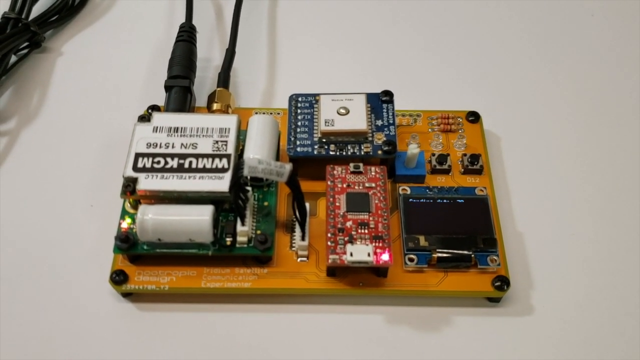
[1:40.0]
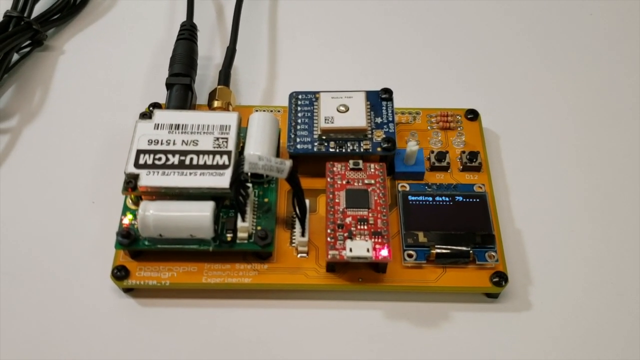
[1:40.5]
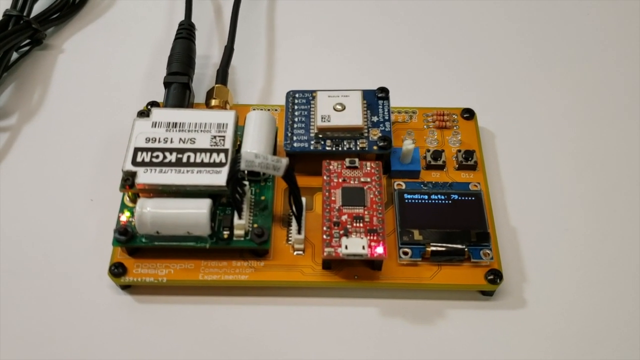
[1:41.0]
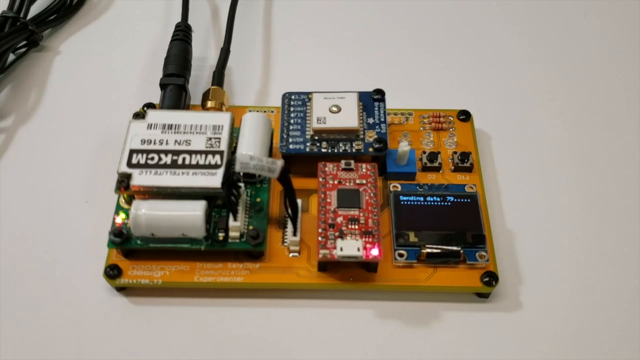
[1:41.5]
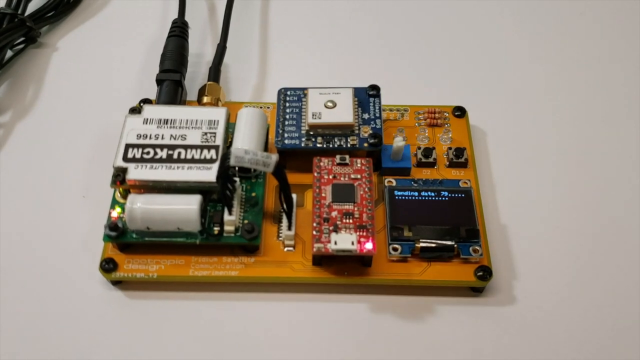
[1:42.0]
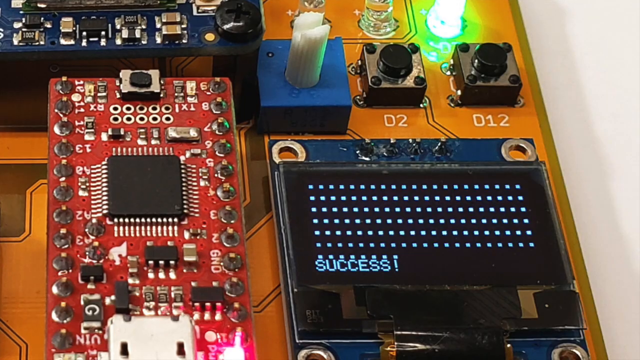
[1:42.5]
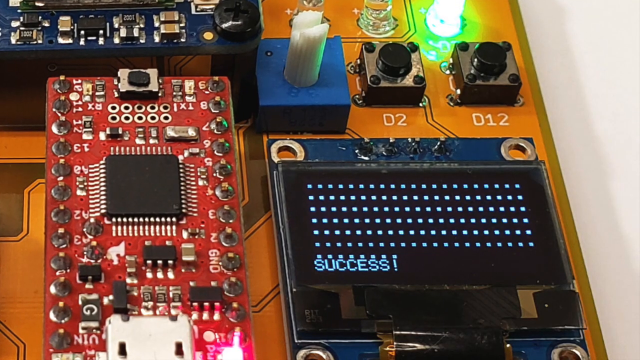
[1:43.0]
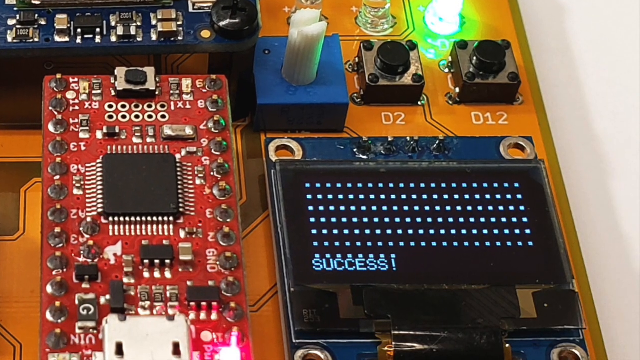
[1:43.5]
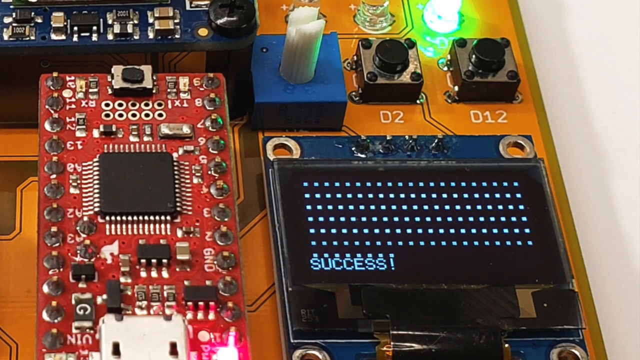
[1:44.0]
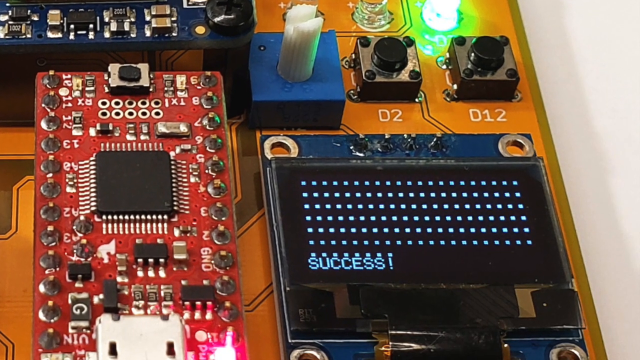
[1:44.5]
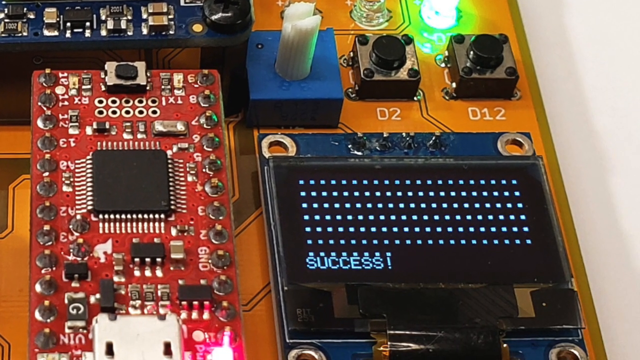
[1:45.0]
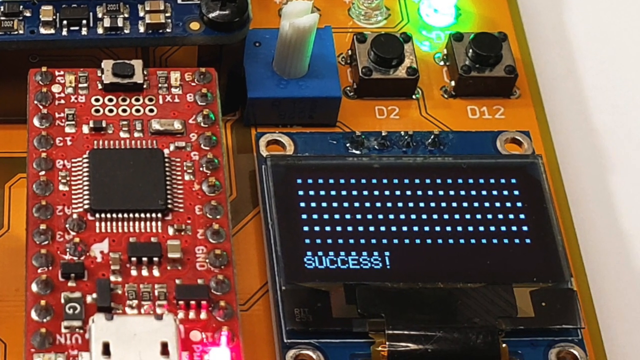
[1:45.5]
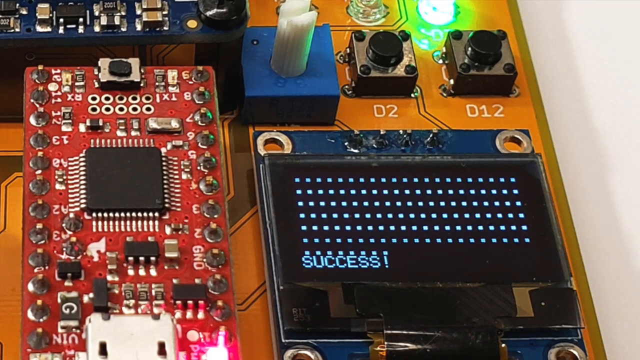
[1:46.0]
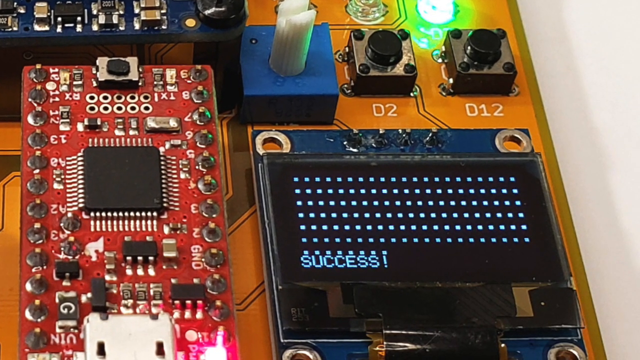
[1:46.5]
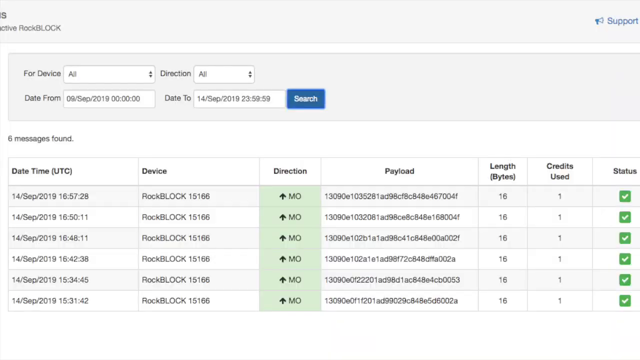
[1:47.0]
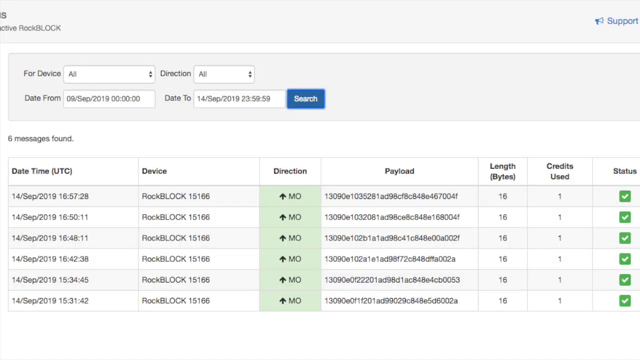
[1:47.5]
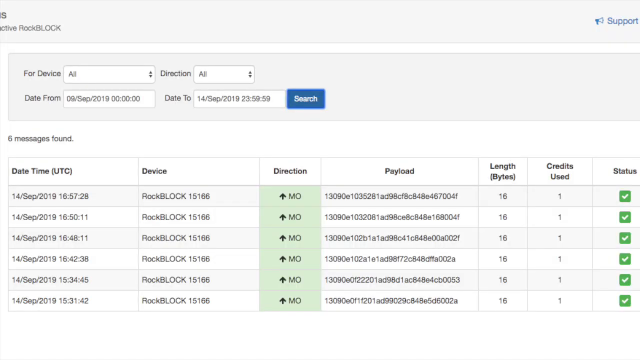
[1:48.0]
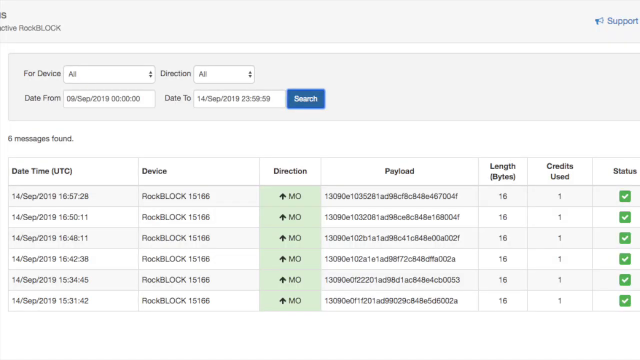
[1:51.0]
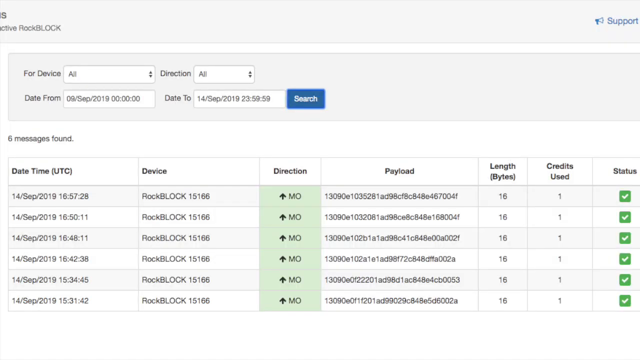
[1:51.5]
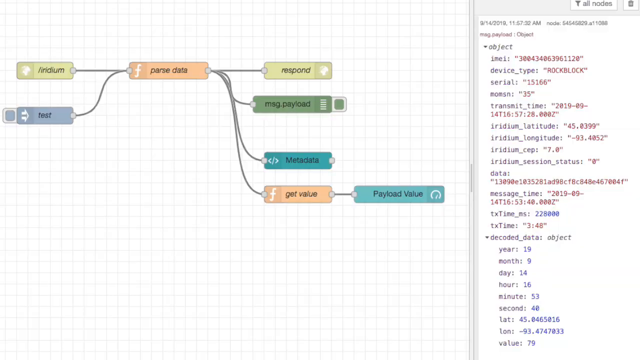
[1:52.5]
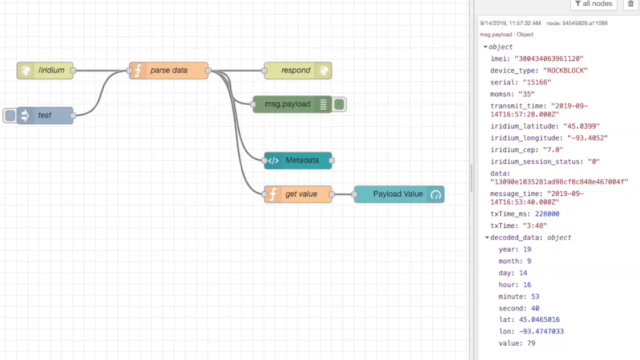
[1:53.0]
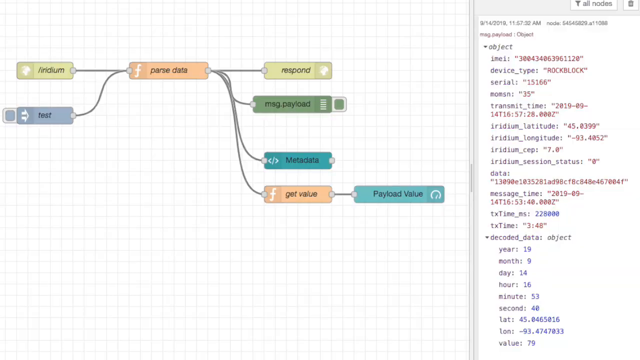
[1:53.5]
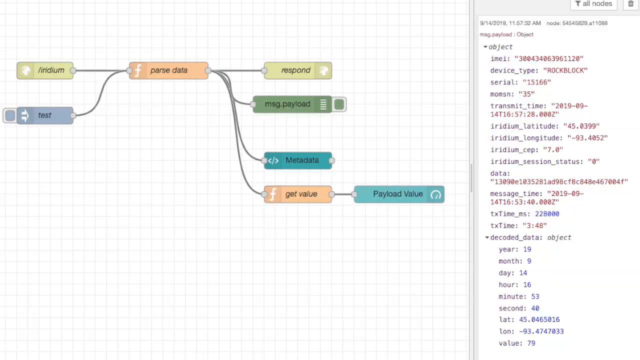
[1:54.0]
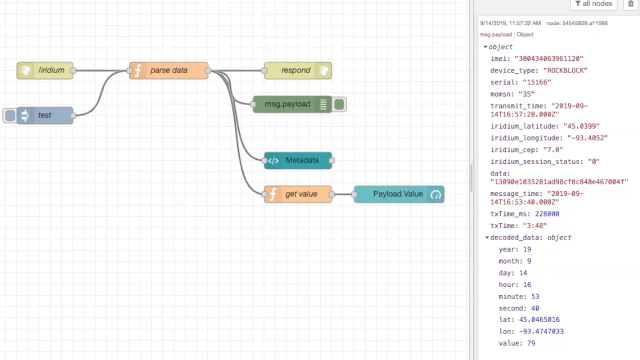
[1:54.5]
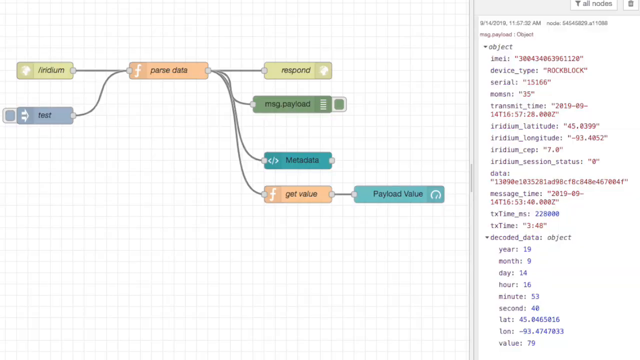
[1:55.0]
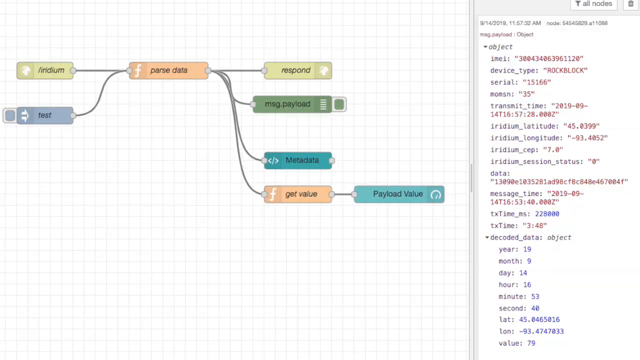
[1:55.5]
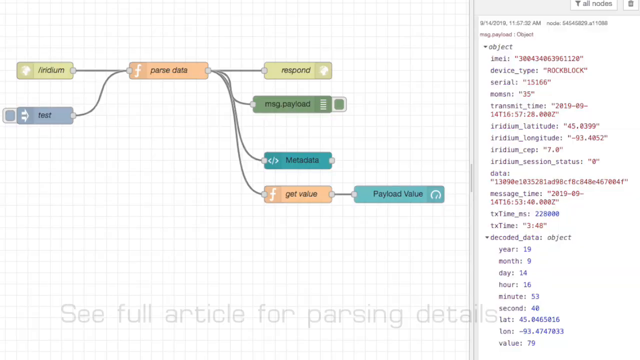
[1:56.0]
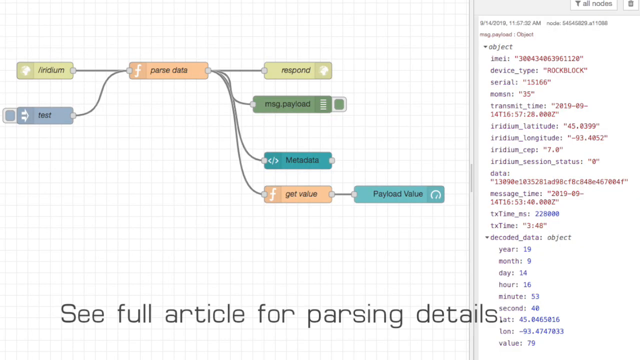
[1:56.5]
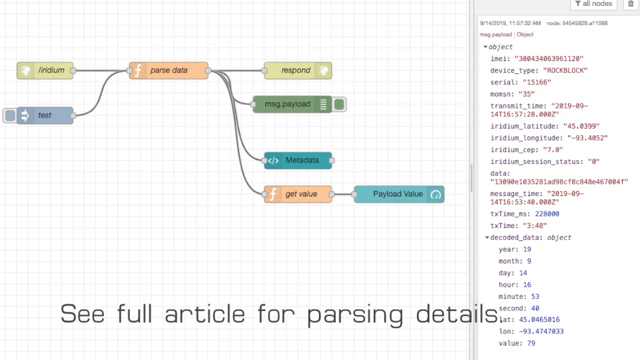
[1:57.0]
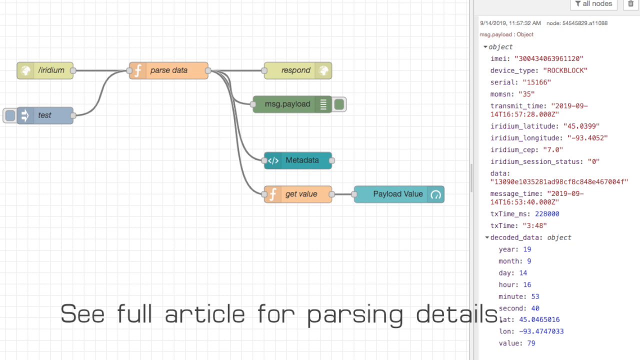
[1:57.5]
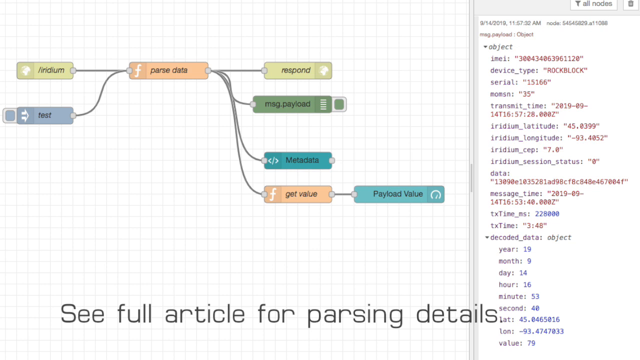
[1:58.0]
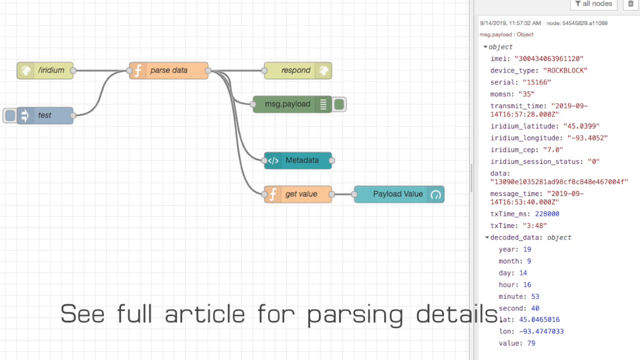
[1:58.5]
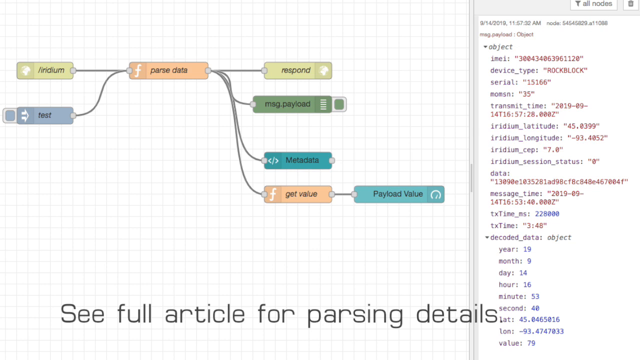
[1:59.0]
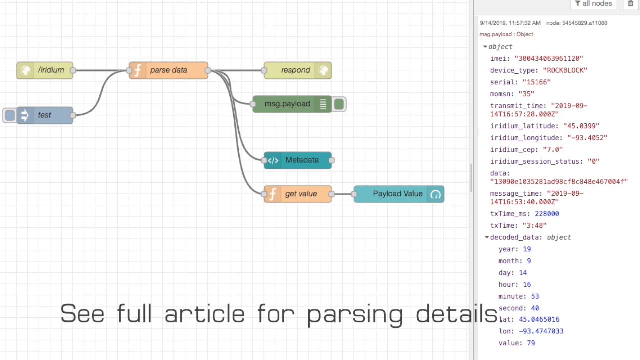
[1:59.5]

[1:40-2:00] The camera zooms in on the bottom right corner, where the small blue square that had the number now shows a bunch of dots across and up and down, with "success" at the bottom left of the dots. Another blue light is flashing above it; there are three lights, and the one flashing now is on the right side, whereas before it was the middle one. In this close view, the red box is visible a little to the left, with a bit of the blue above it, and a small white knob up to the left. The video then goes to another page with fields for device, direction, date from and date to, and a search button next to them. Below is a table with six rows and columns, left to right: date time, device, direction, payload, length bytes, credit used and status. In the top right corner is a blue support button. It then cuts to the part that was too small to see in the earlier wide view, toward the bottom right corner. A kind of brownish small rectangle is on the left side, with a blue one below it. Lines come out of them to a red one, which has four lines going out to the right, to a yellowish one, then green, dark blue and reddish ones, with another one coming out from that going to red. Code runs down the right side, and text goes across the bottom.